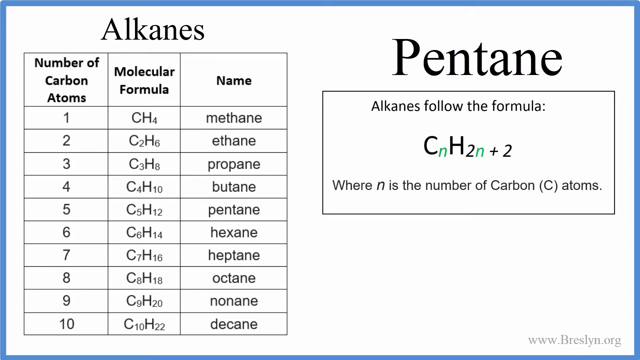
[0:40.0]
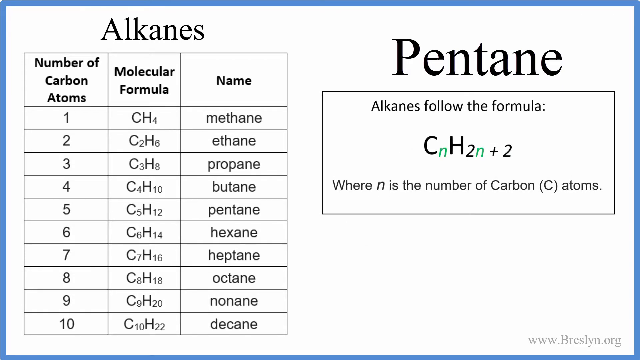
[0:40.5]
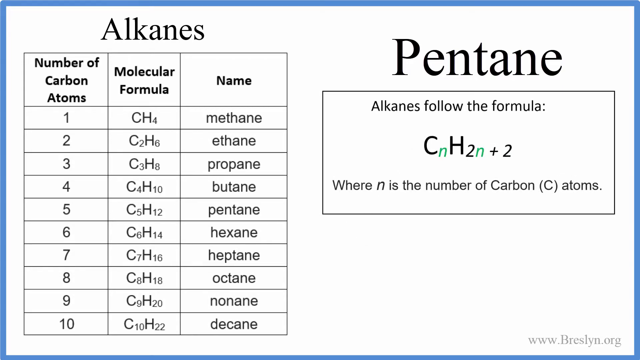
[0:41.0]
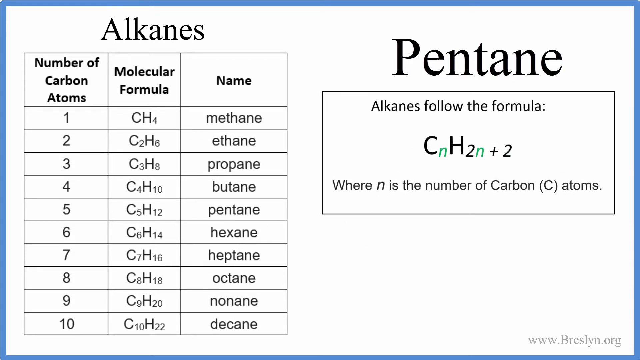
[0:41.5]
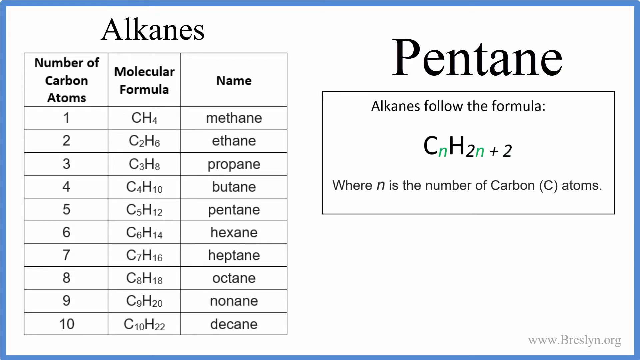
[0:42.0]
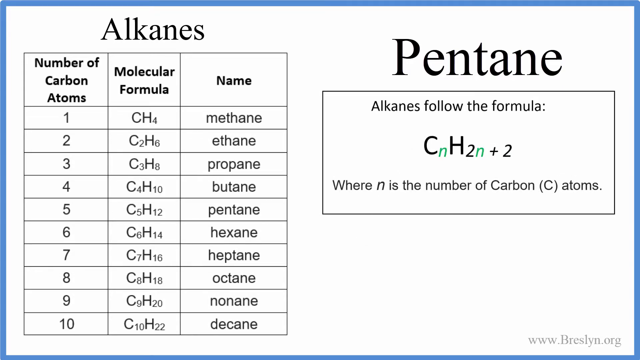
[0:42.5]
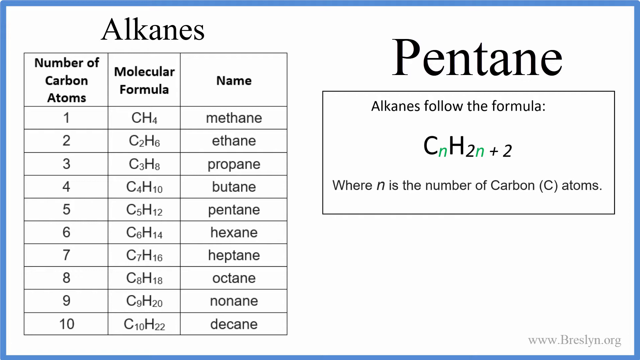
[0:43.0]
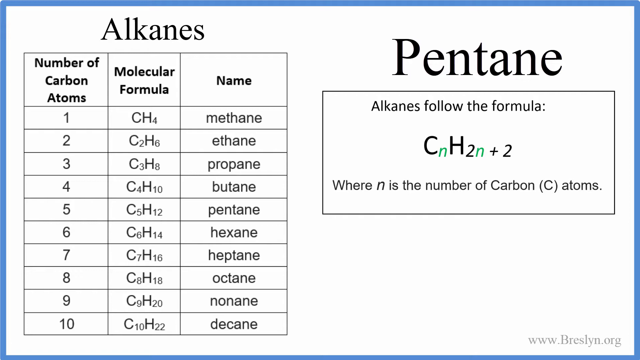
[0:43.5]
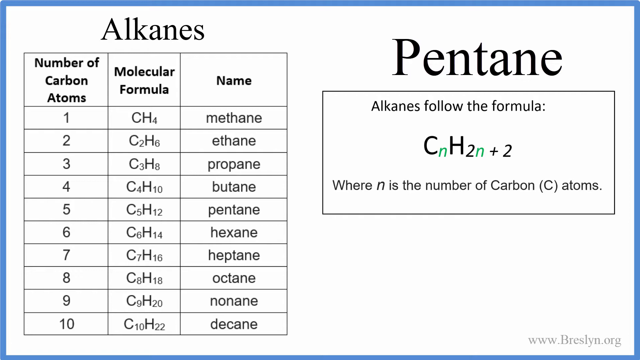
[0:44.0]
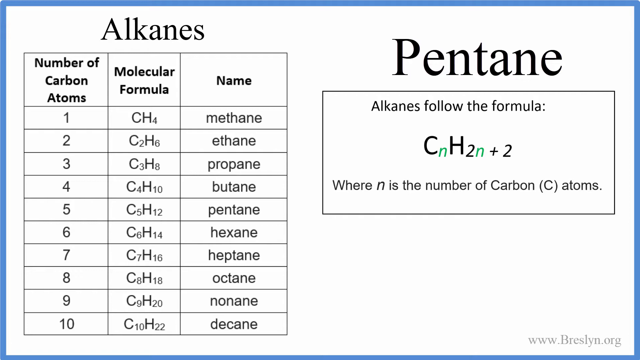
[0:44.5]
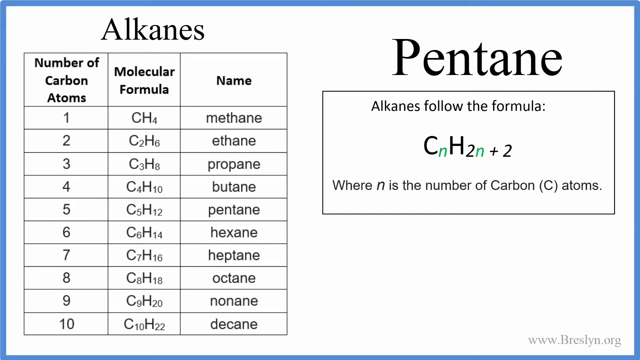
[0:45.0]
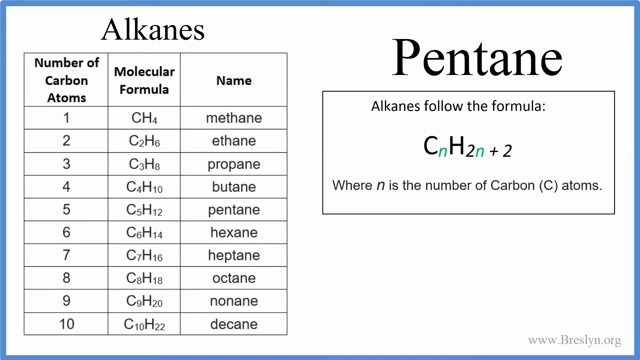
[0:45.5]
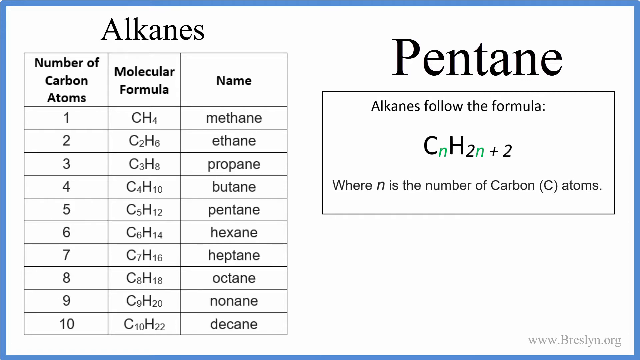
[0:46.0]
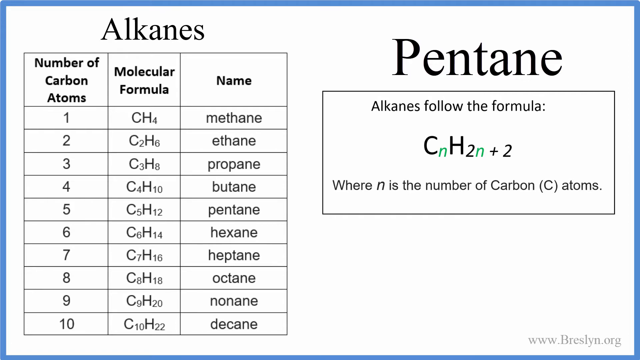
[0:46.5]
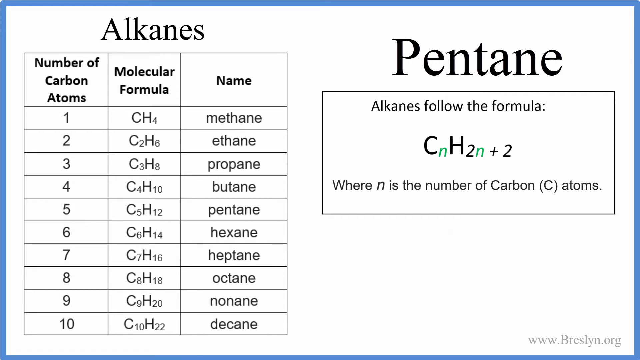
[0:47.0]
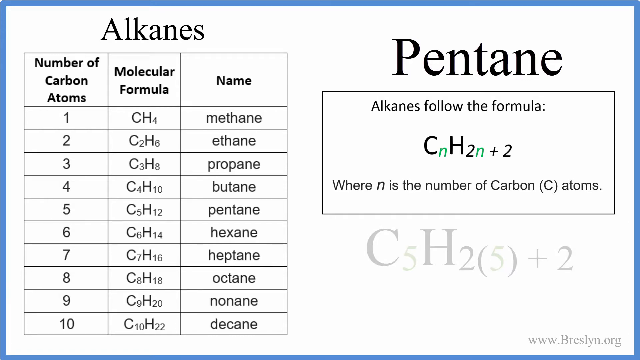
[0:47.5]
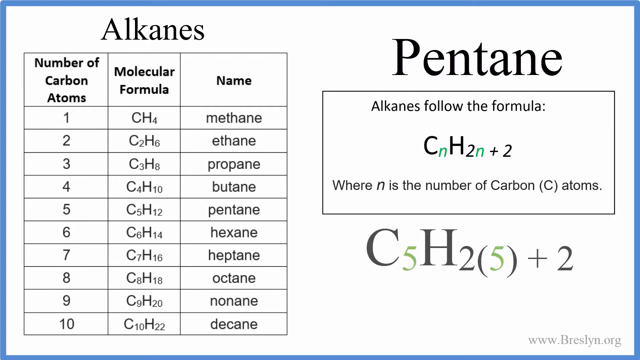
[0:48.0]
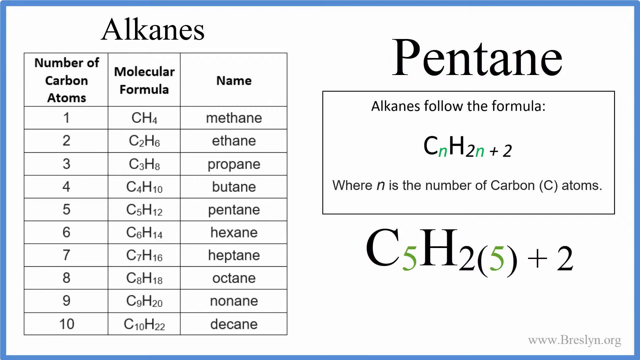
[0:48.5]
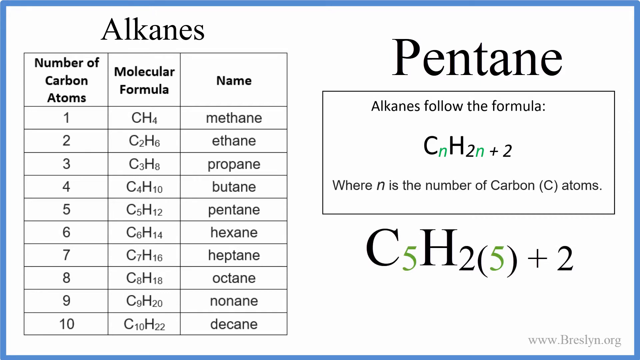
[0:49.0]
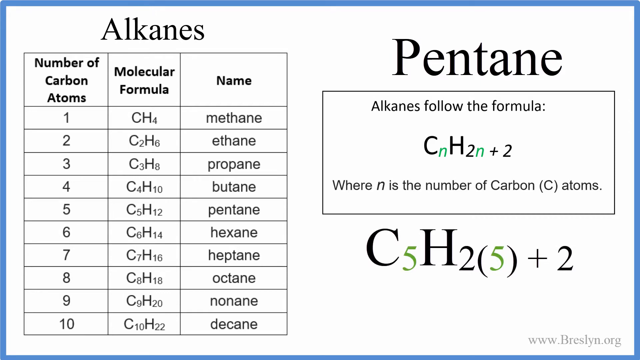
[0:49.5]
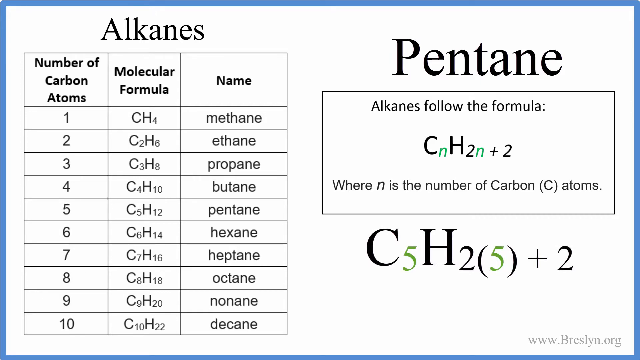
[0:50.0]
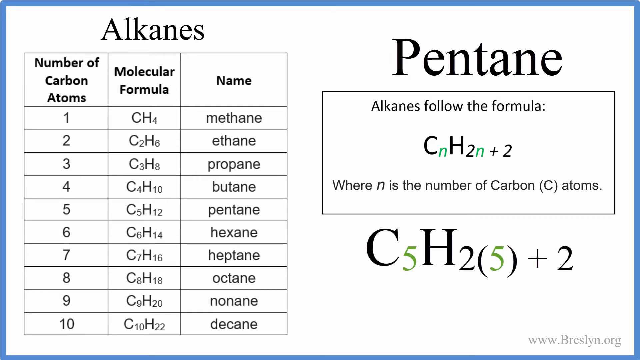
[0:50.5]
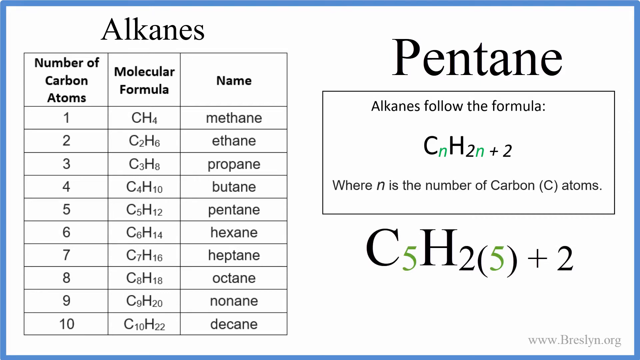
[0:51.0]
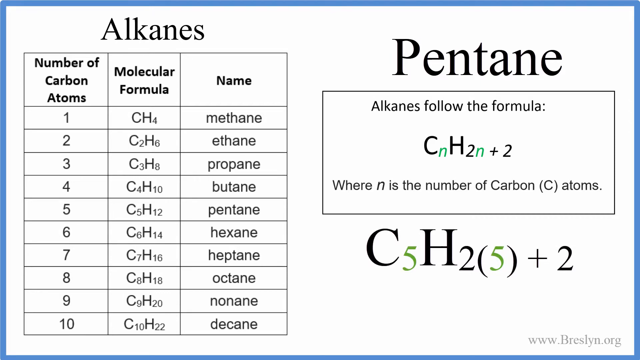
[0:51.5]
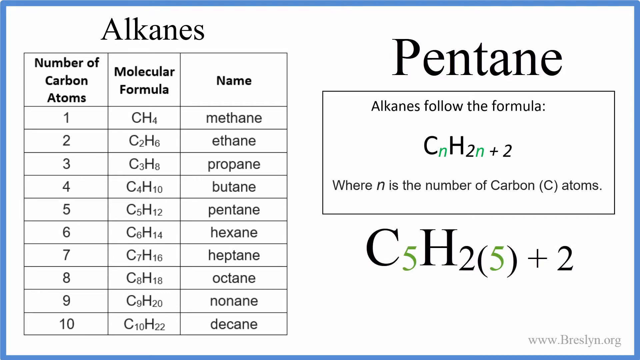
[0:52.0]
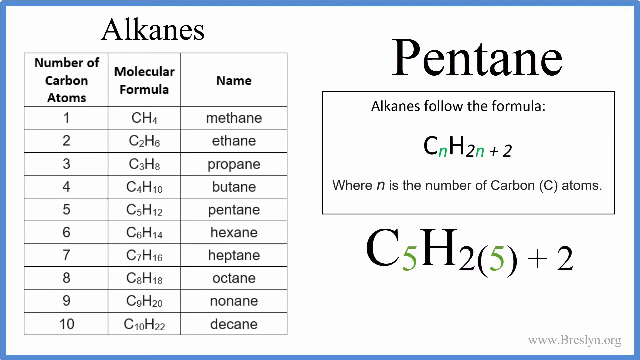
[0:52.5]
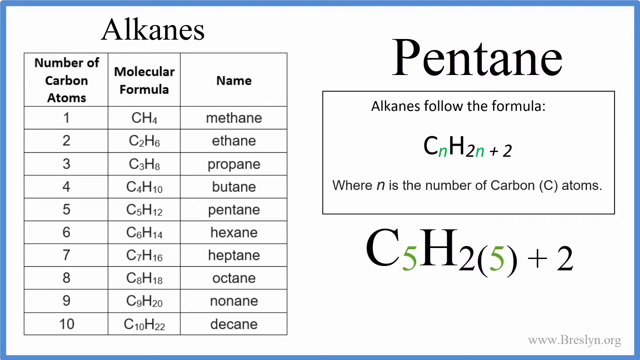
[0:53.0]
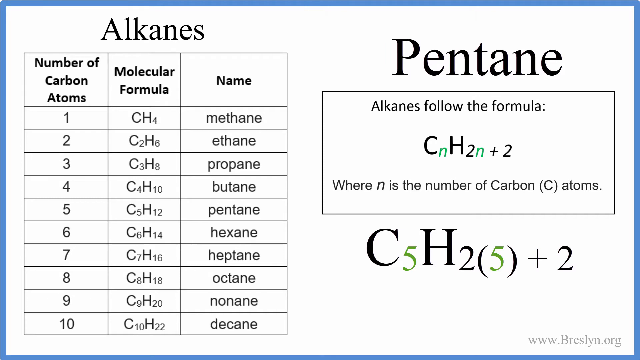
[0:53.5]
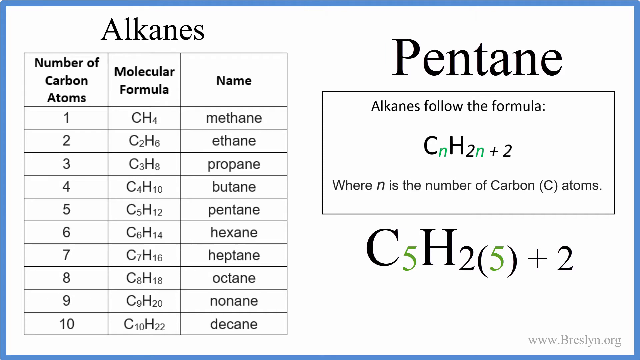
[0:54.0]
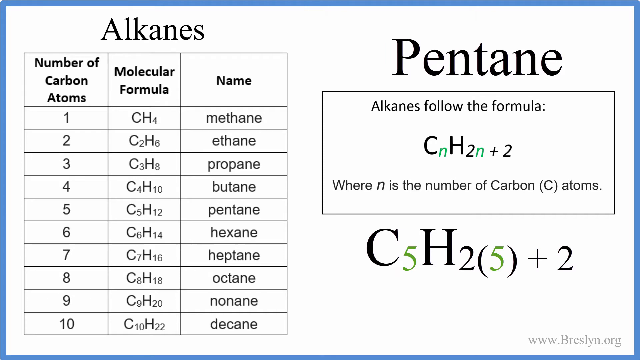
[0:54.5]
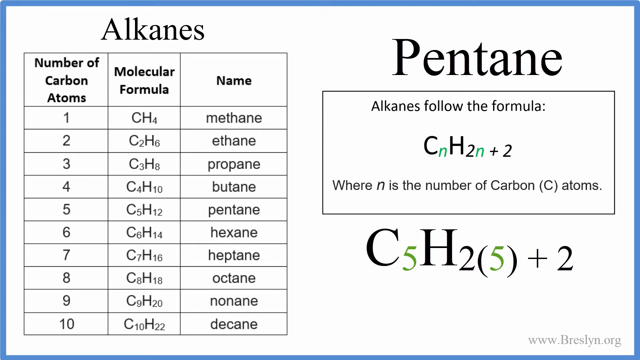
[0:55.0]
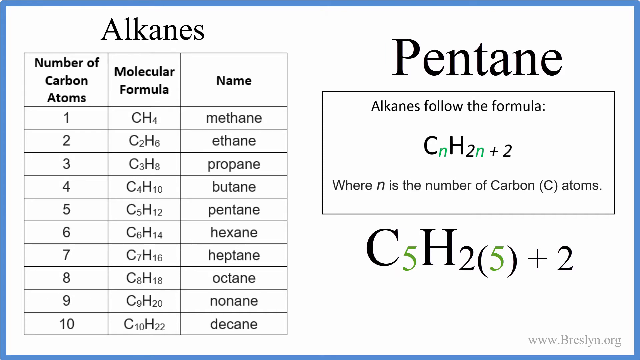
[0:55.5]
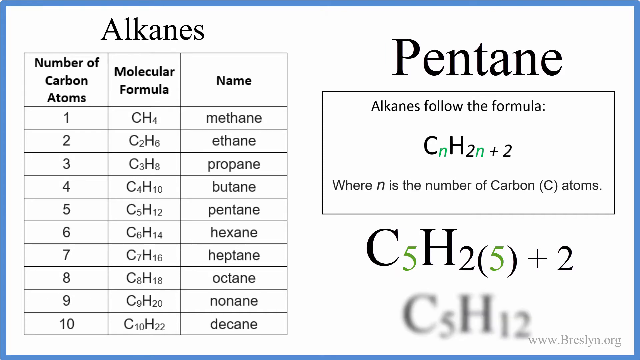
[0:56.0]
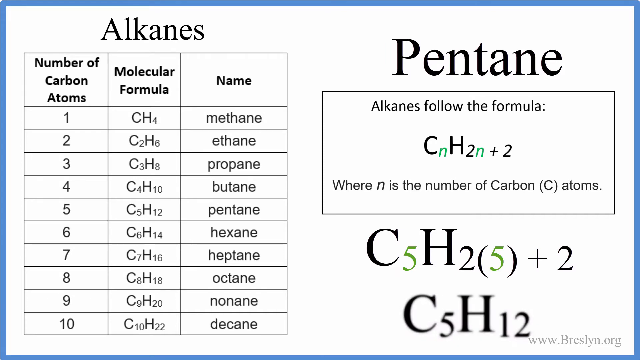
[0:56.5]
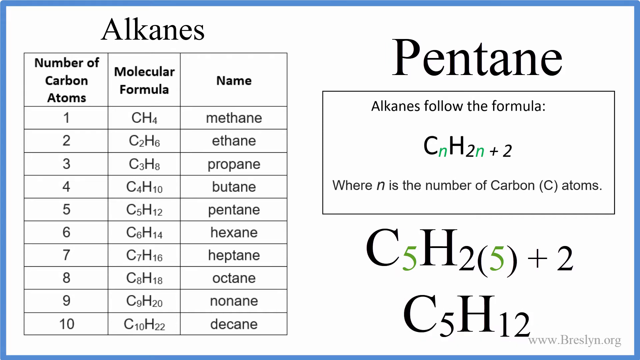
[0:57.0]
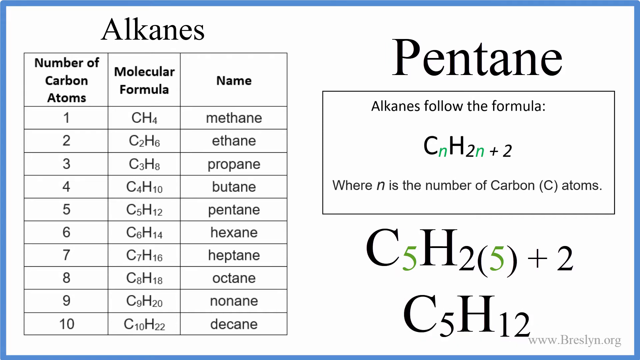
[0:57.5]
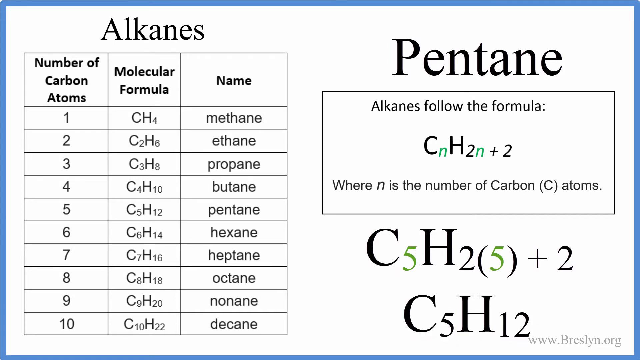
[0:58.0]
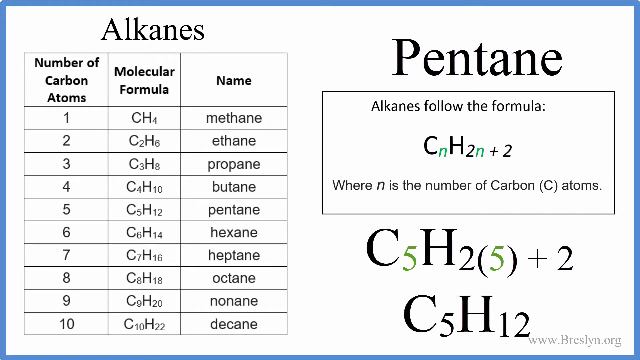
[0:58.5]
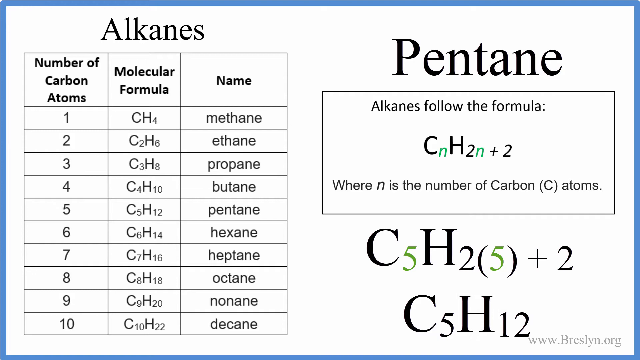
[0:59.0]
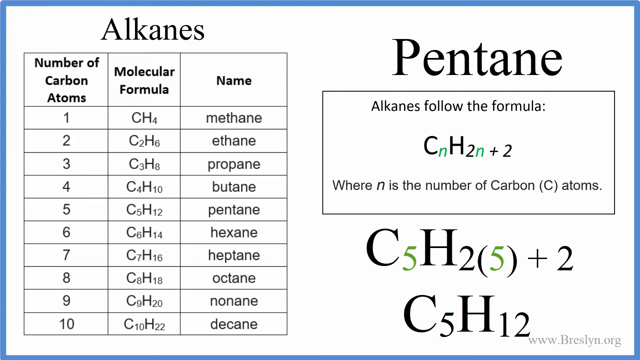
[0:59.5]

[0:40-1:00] All the names of these structures end the same way, with "ane". Below the box, a large molecular formula for number 5 is shown: instead of 2n, it shows 2 with a bracketed 5, with the 5 next to the C and the 5 in the H subscript colored green, followed by plus 2. Below that, the final formula C5H12 appears all in black, written the way it is in the row. The example is credited to breslyn.org. The video moves slowly, and all the letters are in a large font that is easy to see and follow.